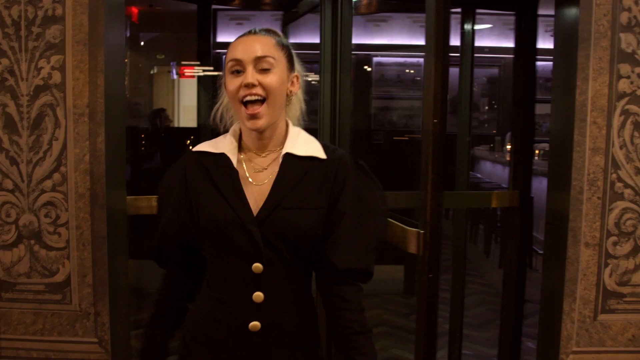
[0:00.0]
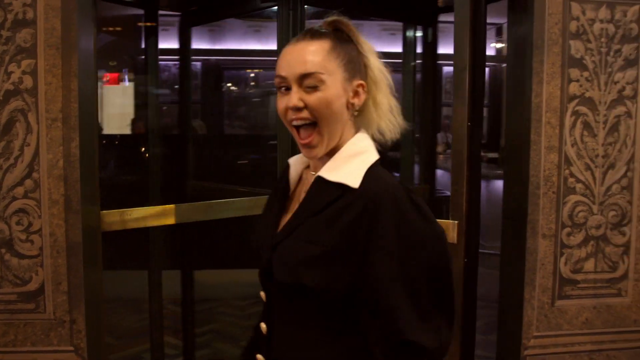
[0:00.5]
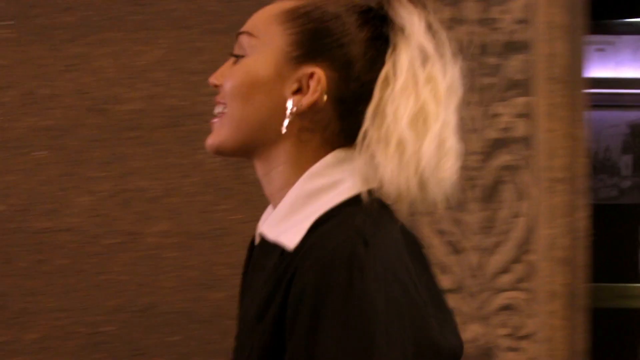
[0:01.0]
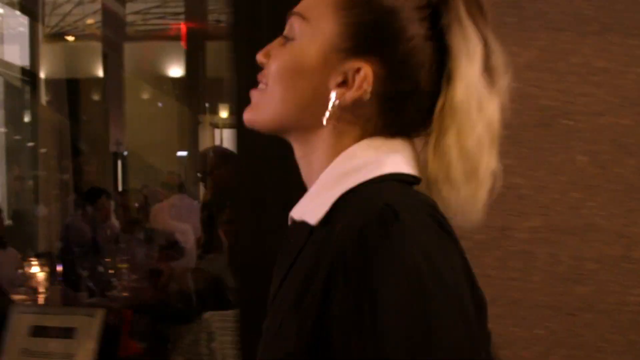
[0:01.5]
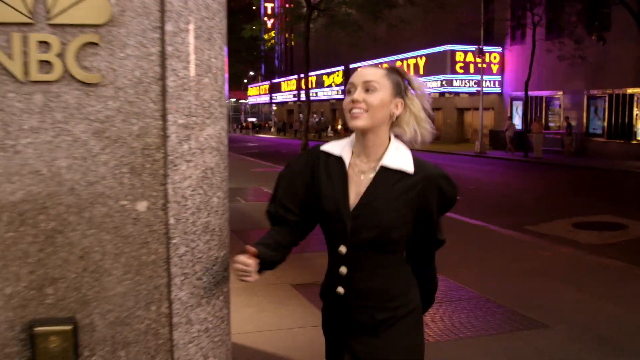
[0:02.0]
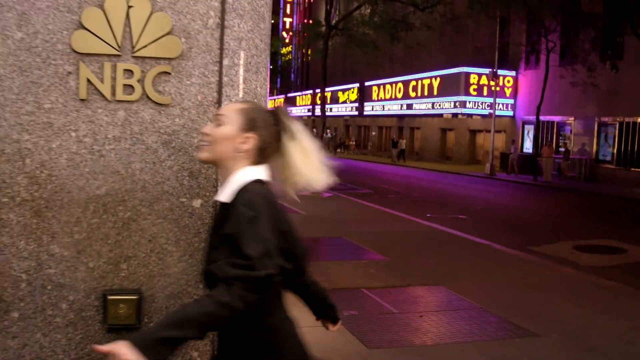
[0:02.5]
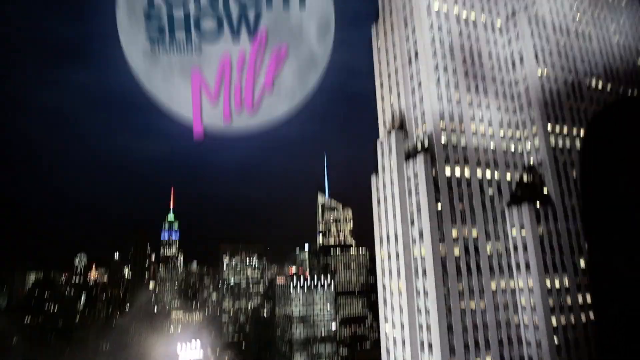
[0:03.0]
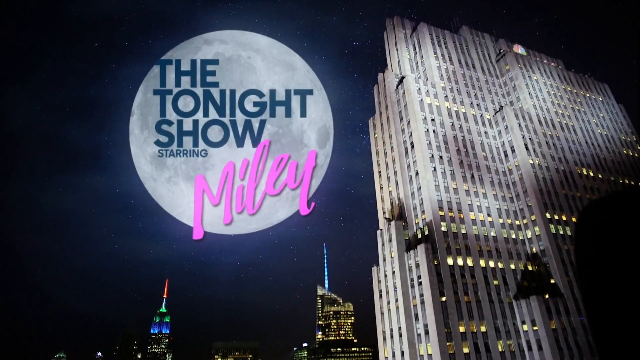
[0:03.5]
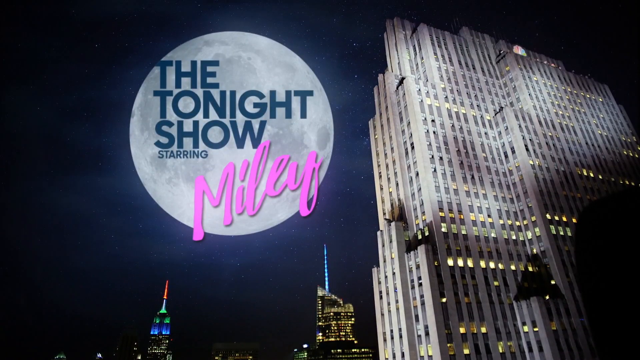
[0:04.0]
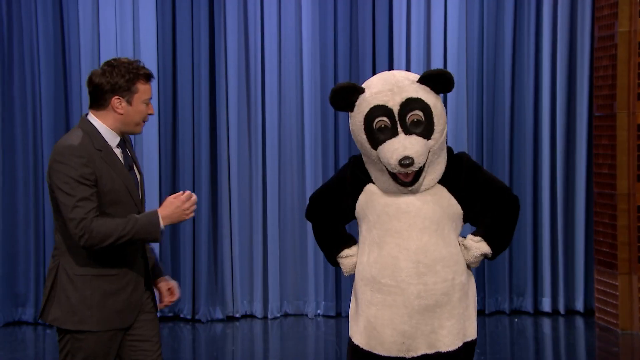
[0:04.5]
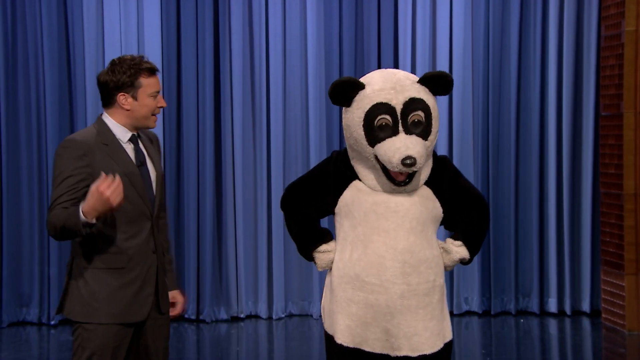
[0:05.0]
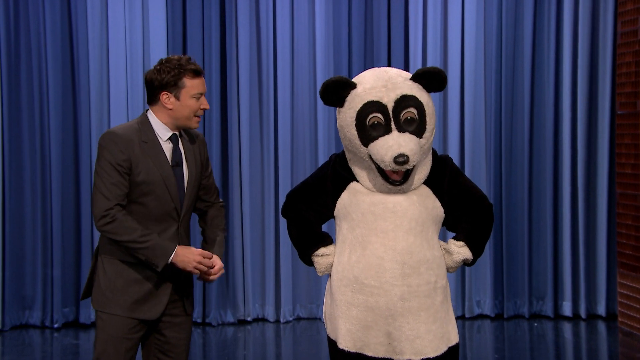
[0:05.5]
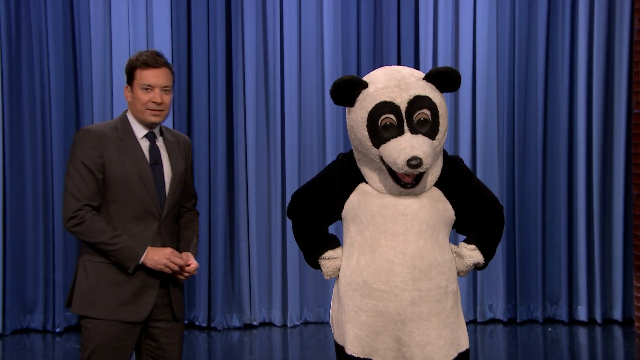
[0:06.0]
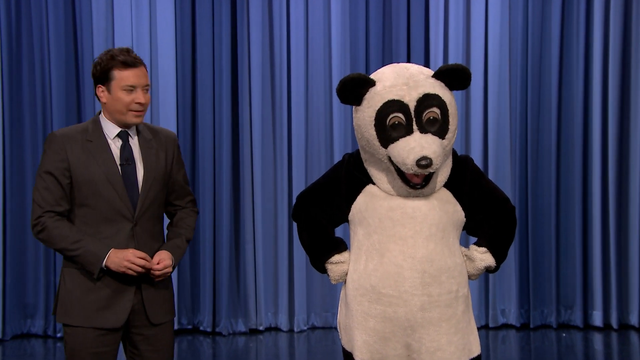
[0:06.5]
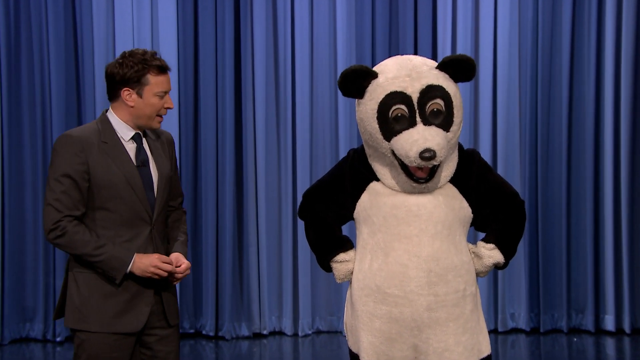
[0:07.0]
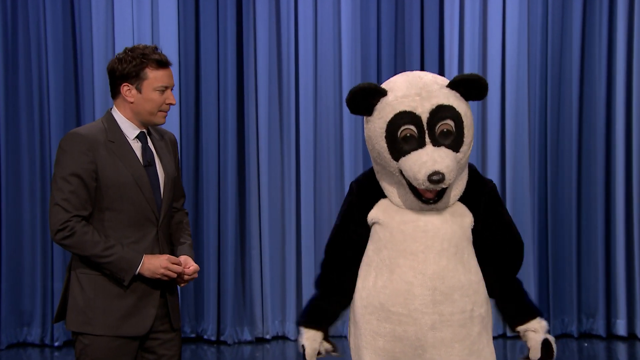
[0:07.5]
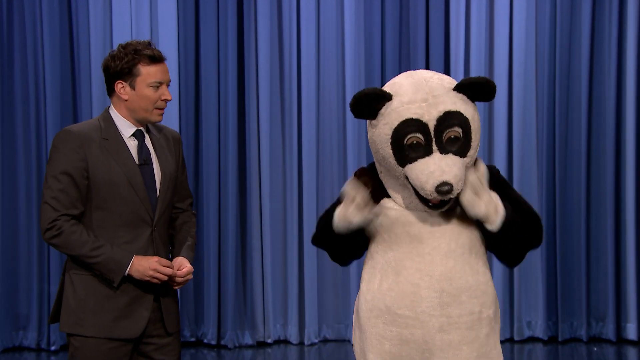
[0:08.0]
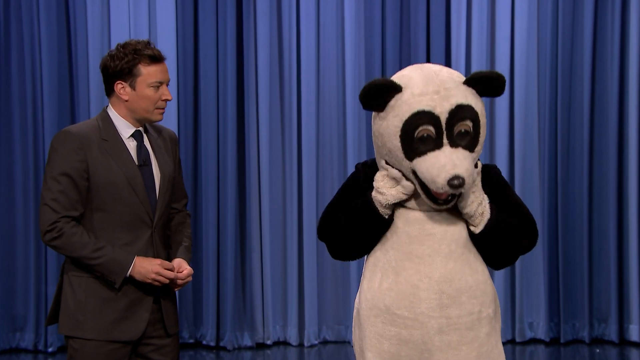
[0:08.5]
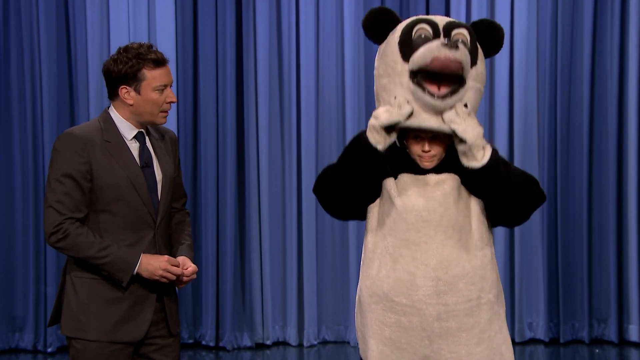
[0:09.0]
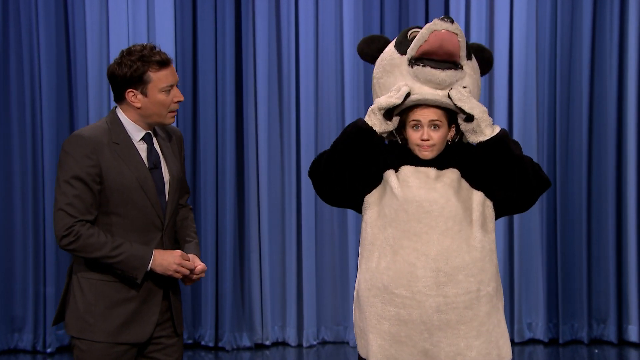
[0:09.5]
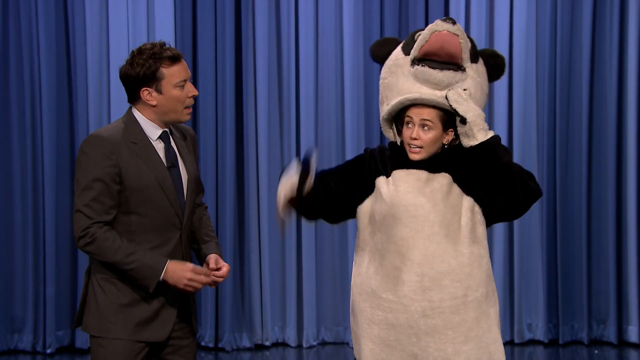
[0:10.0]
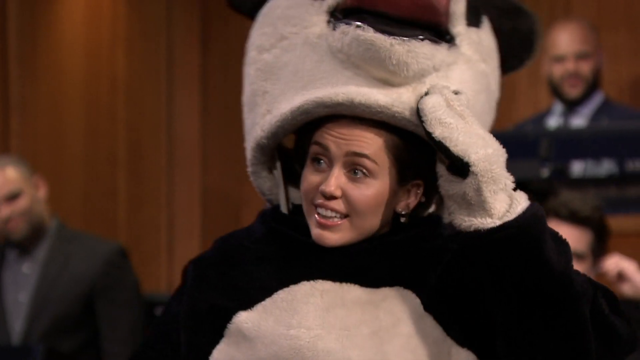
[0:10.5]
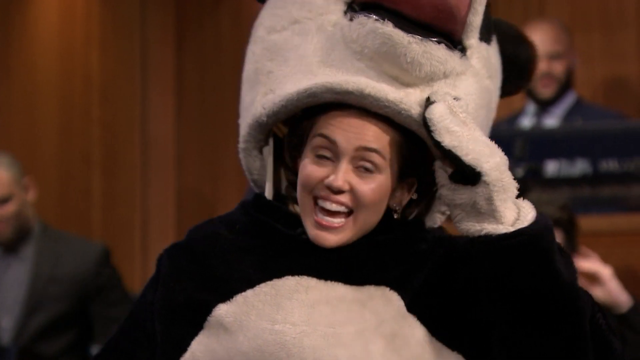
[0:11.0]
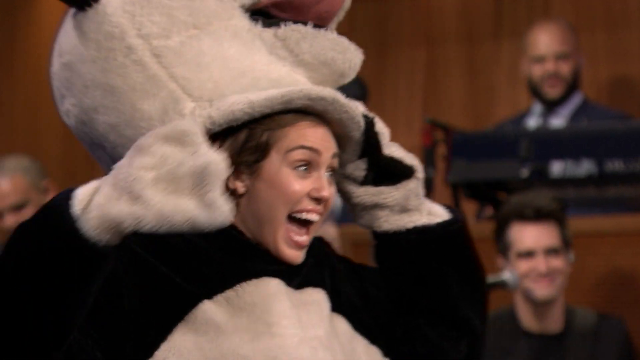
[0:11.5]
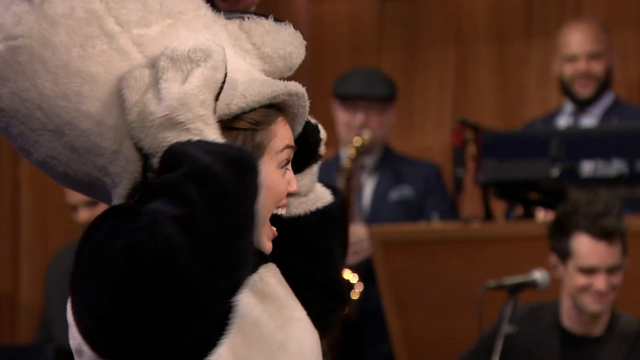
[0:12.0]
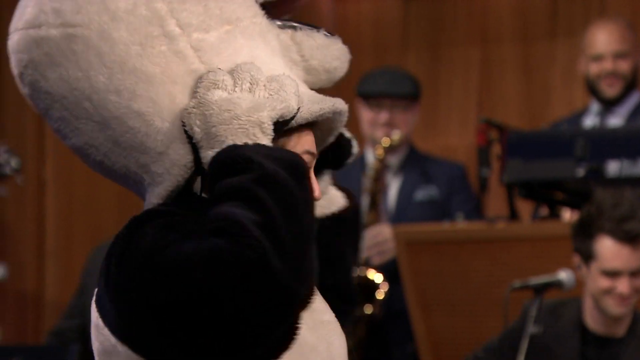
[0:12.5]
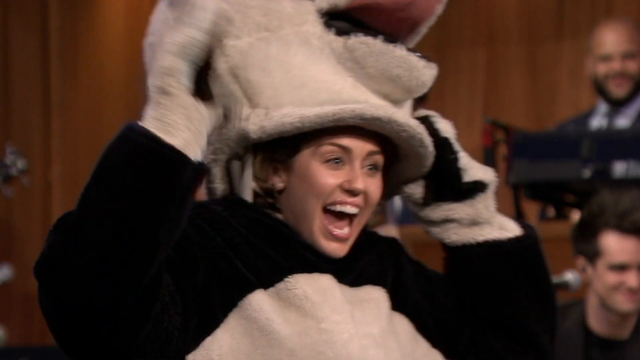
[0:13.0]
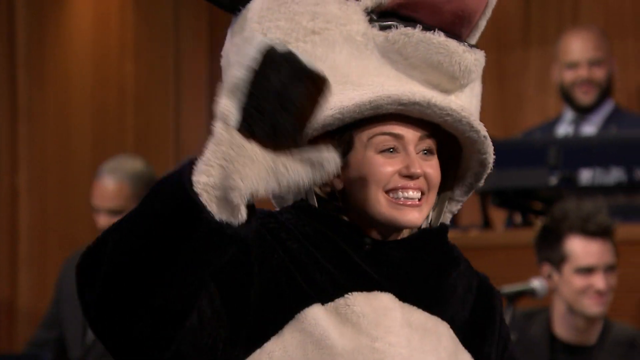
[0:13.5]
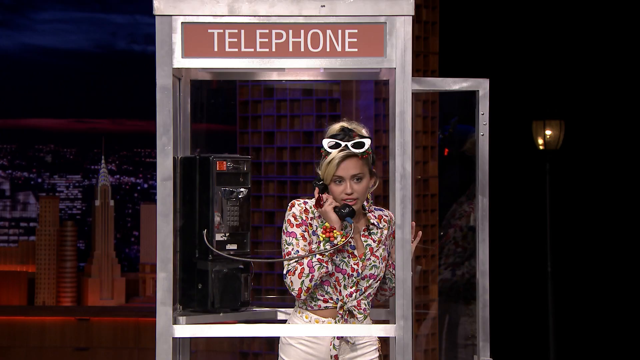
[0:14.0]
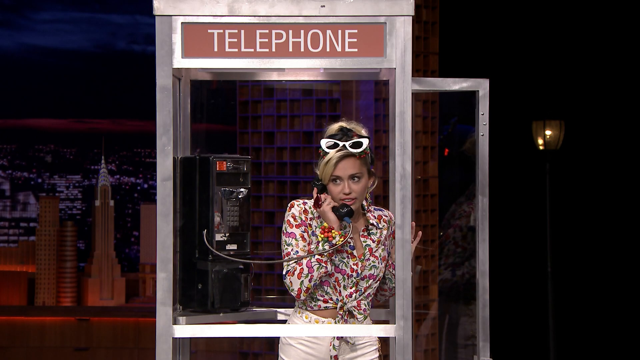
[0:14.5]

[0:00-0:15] Miley Cyrus comes out of a revolving glass door with a black border around it. The shot is up close, so only a little of the left and right sides of the building's front are visible; it looks kind of goldish. She wears a black, kind of poofy-sleeved, almost suit-looking outfit with a big white collar, gold earrings, and her blonde hair up in a ponytail. She winks at the camera, walks to the left of the screen and around a corner, where there is an NBC logo. The view zooms out to a gray building on the right side that goes all the way from bottom to top against a night-looking sky. On the left is a big circle, like a moon shape, that says "The Tonight Show" in blue and "with Miley", with "Miley" in pink. The video cuts to Jimmy Fallon on the left side facing right, in a gray suit, blue tie and white shirt, with a big blue curtain behind him. Next to him on the right is a black and white panda bear. The panda pulls up its head, revealing Miley underneath; she smiles, winks and waves at the crowd, and band members are visible in the background. The video then cuts to her in a telephone booth.